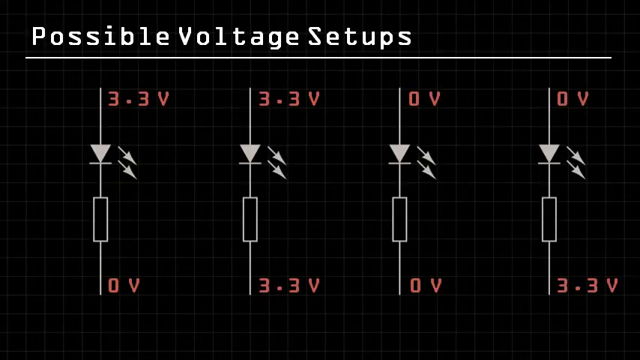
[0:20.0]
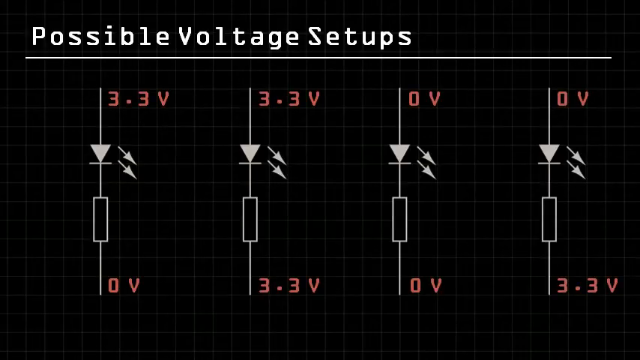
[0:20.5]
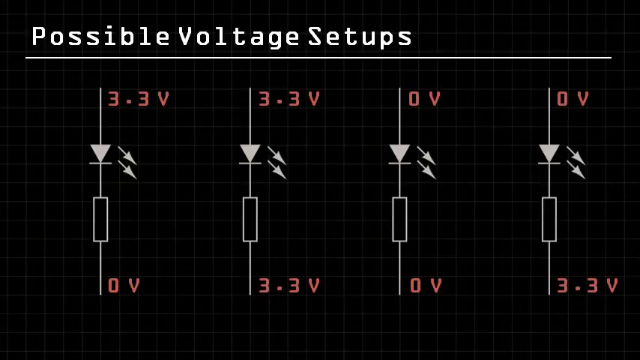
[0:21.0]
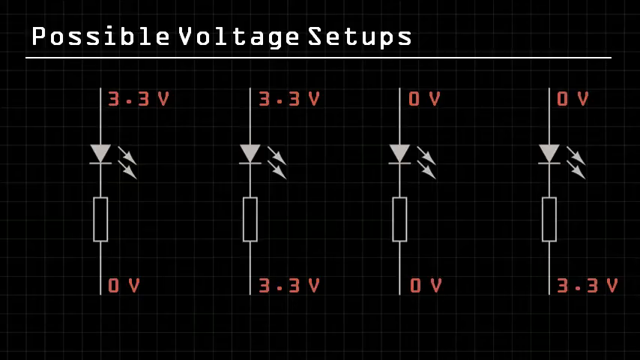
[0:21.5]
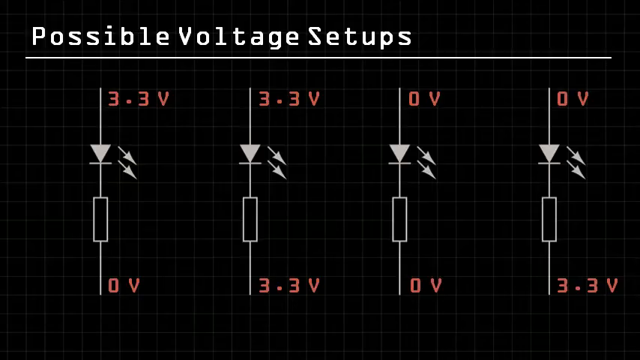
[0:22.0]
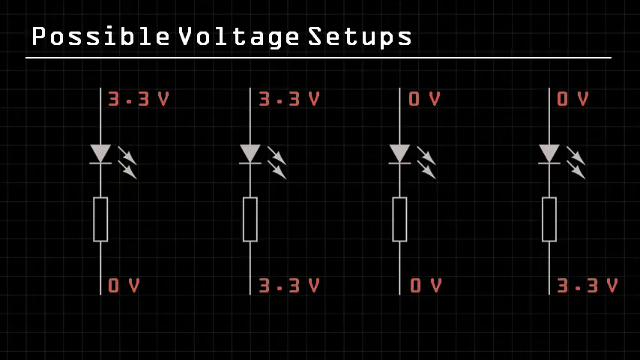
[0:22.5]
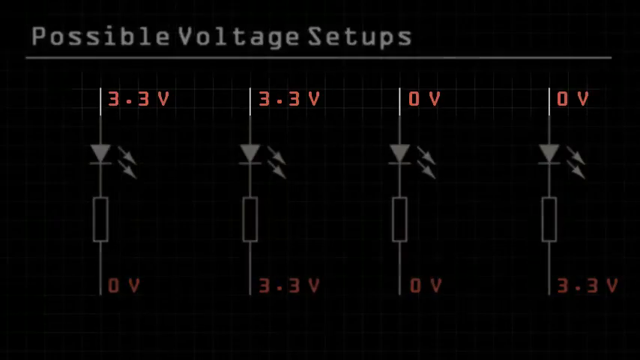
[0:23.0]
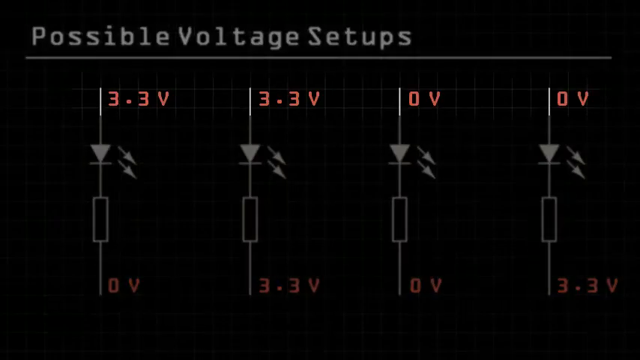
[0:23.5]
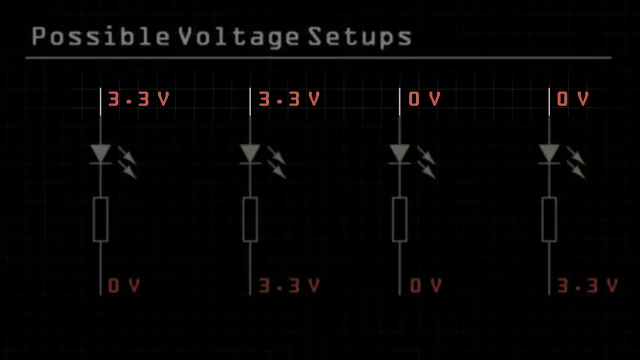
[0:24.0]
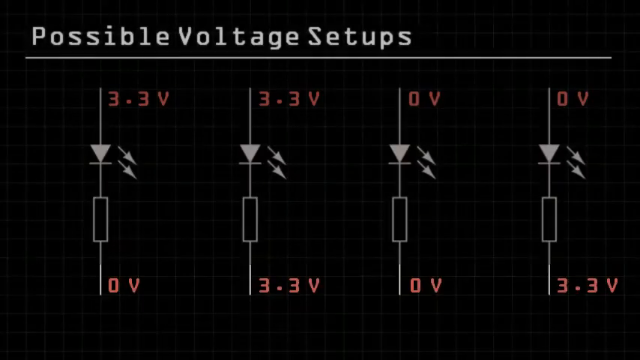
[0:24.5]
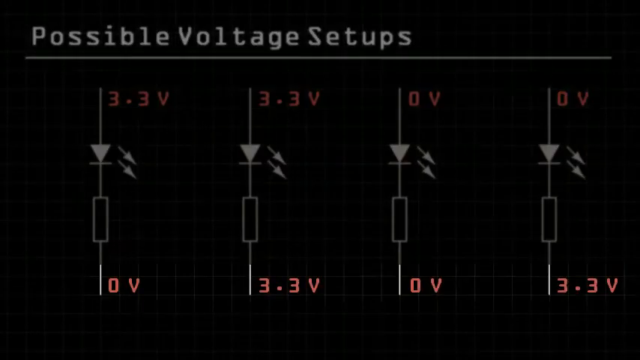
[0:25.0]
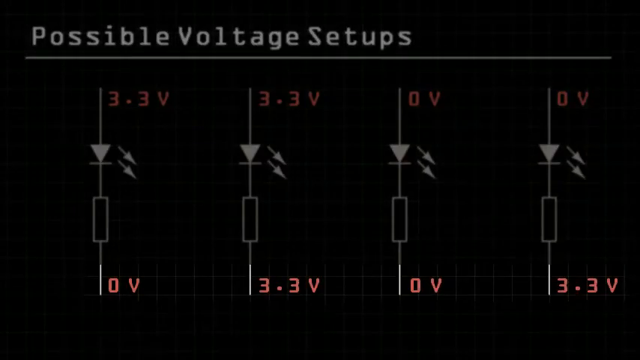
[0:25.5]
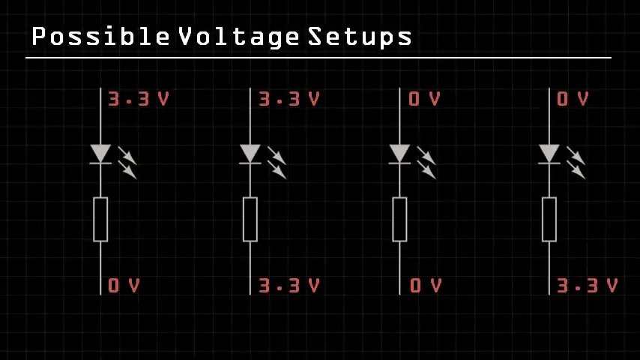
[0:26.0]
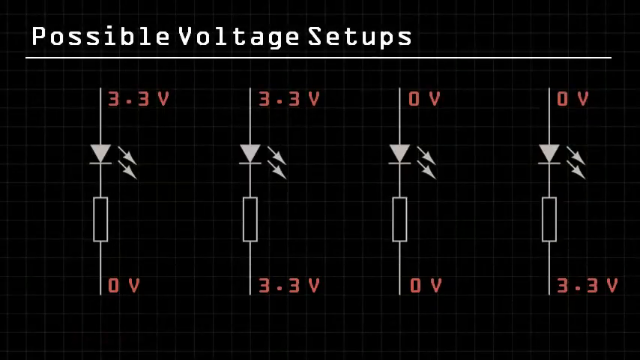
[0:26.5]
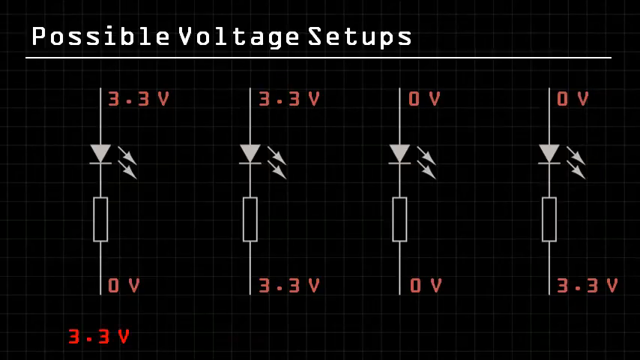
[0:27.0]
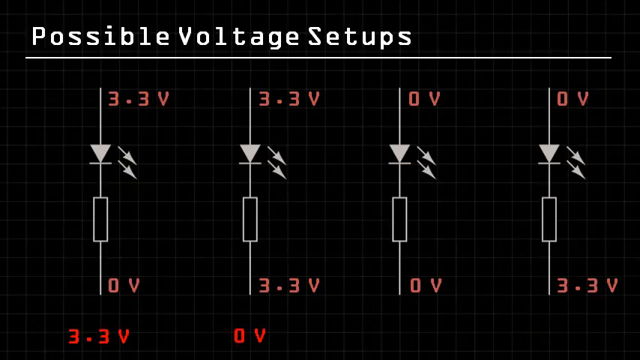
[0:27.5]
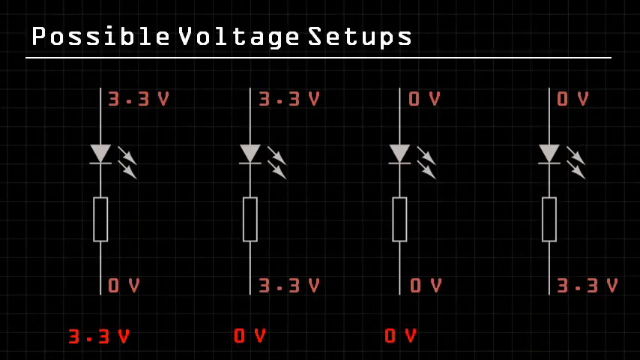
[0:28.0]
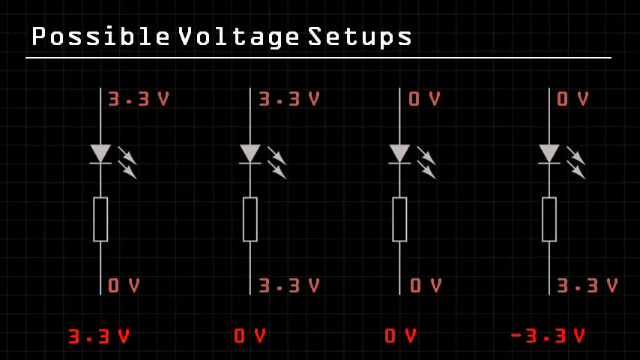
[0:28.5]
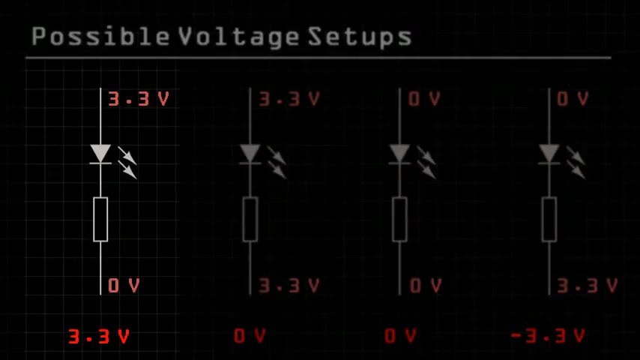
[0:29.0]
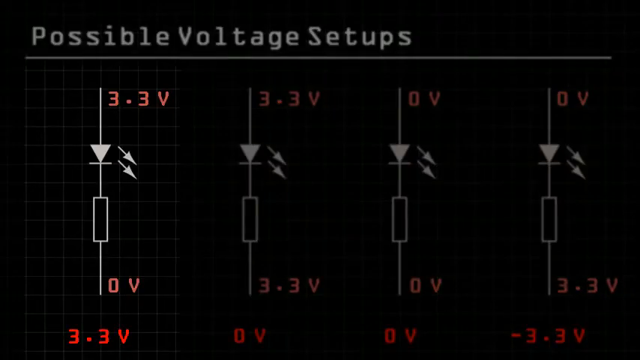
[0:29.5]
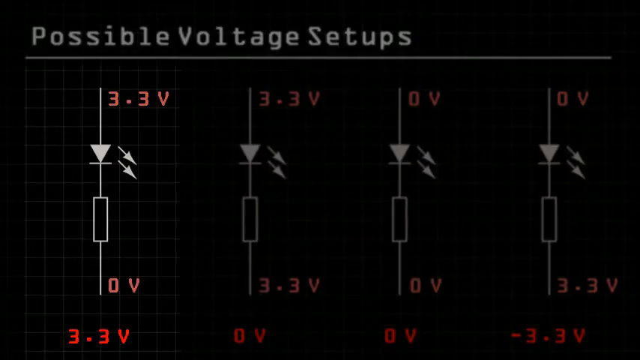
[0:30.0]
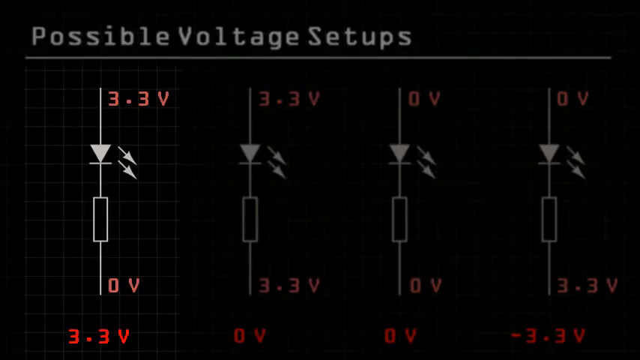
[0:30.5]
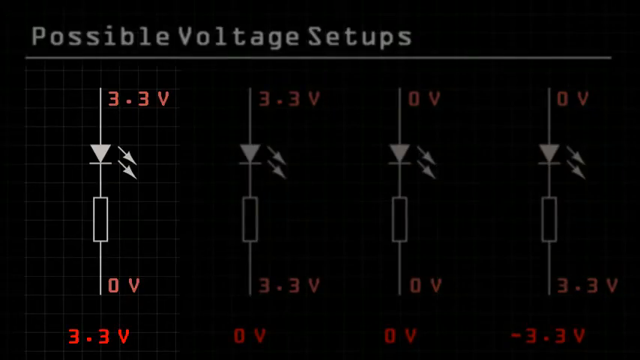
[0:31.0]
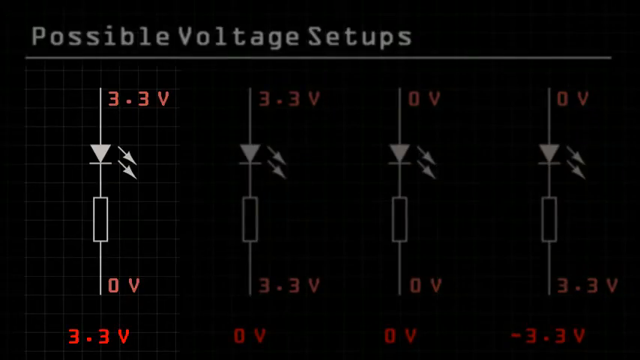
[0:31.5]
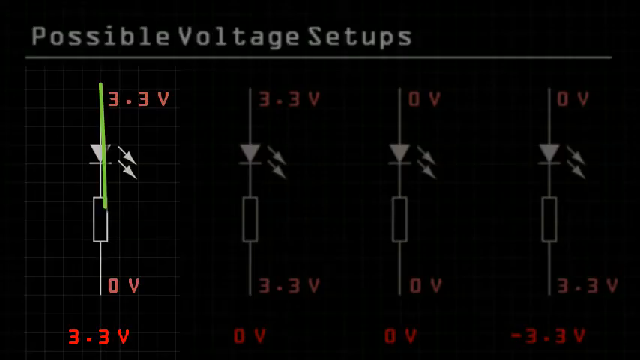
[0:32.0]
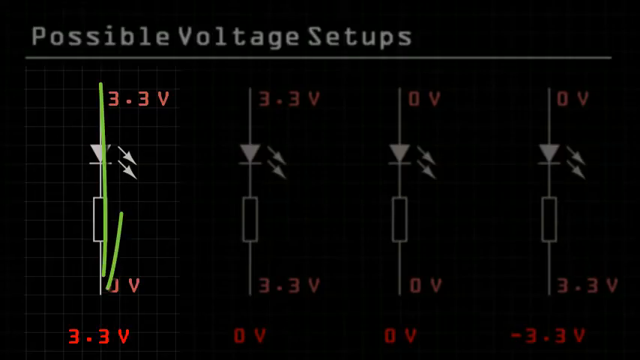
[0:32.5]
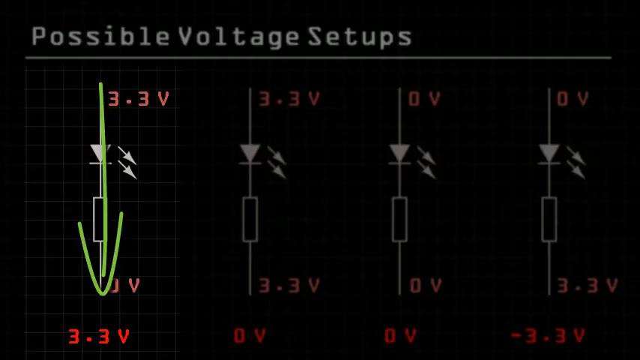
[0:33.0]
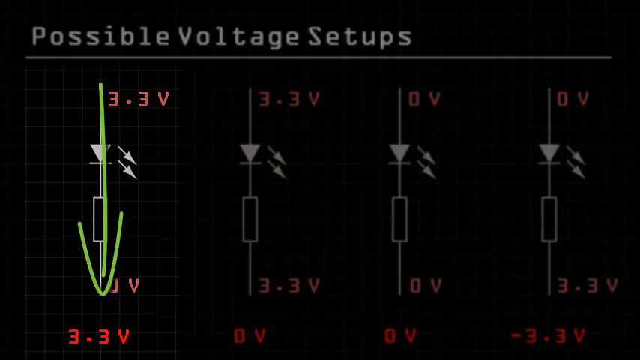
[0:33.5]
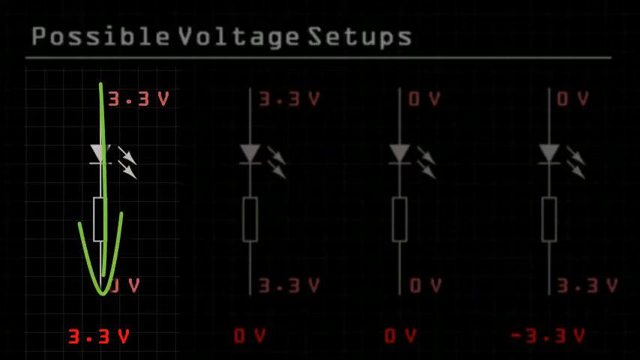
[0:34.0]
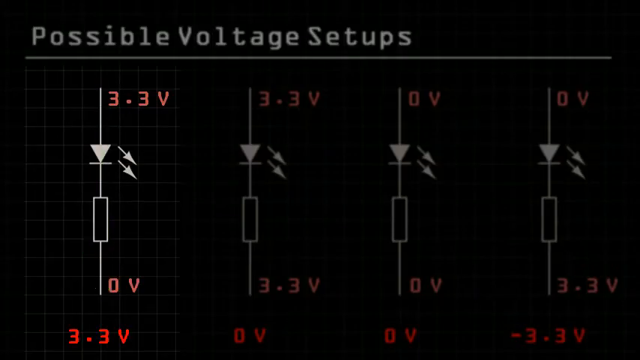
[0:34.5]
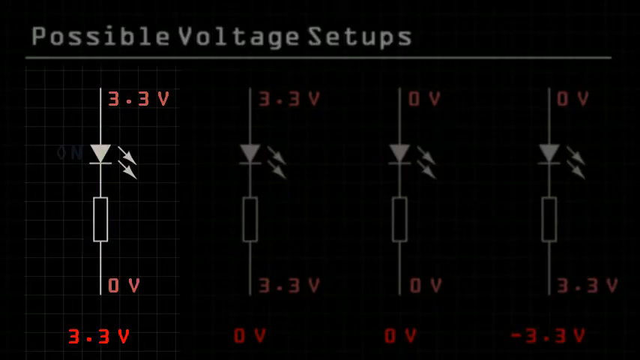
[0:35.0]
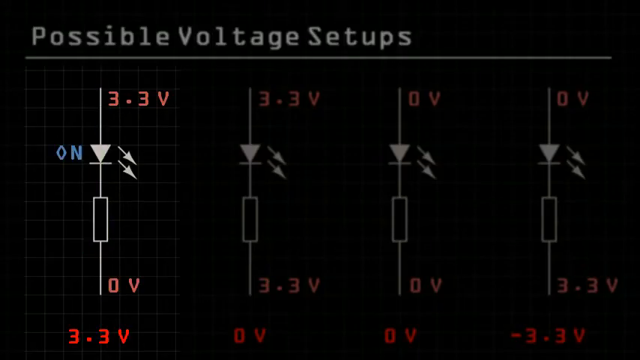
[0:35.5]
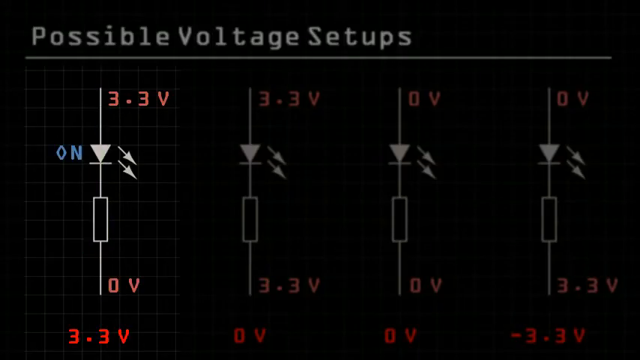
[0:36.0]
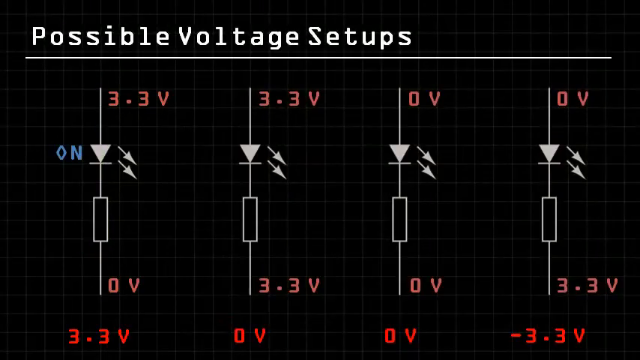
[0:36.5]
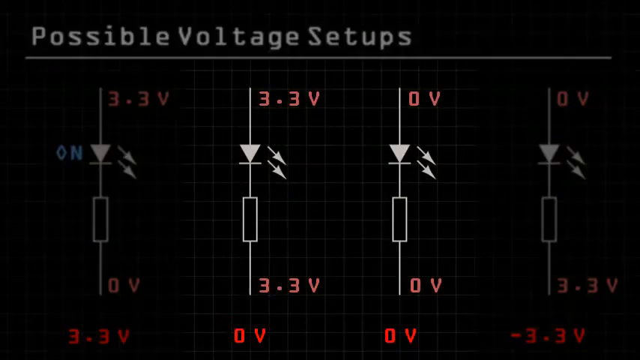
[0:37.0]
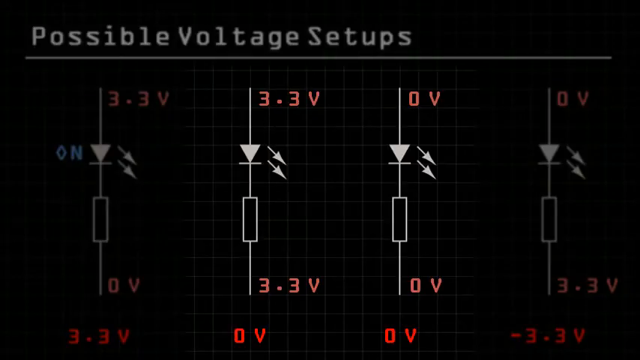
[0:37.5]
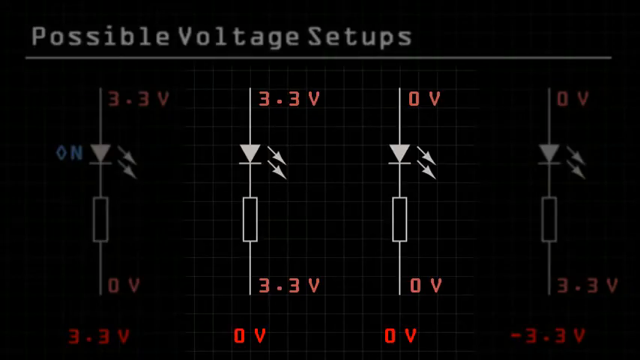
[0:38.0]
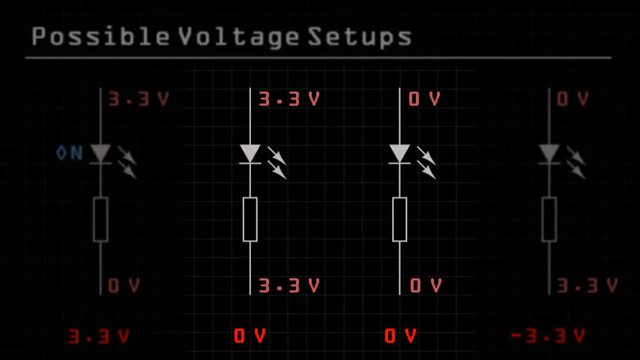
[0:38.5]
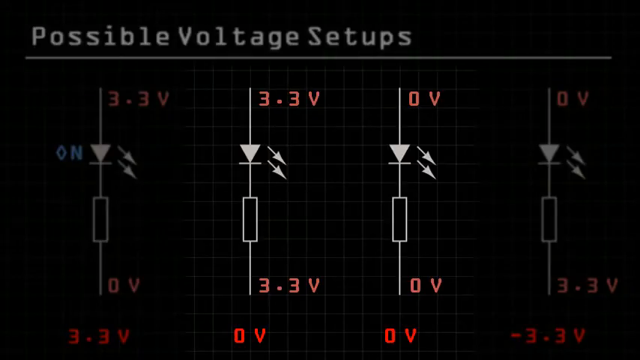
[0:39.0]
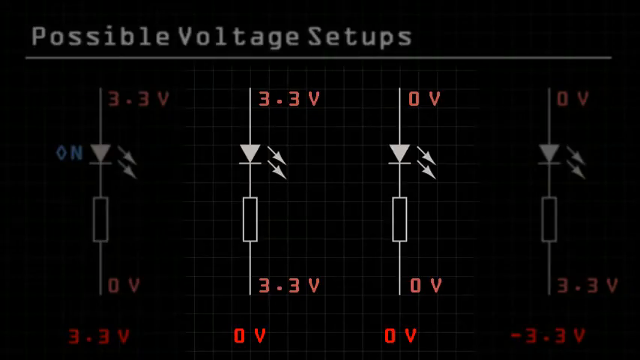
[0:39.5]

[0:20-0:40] The same possible voltage setups screen now has numbers appearing on each diagram. On the first, the top says 3.3 volts and the bottom 0 volts; on the second, the top is 3.3 volts and the bottom 3.3 volts; on the third, the top is 0 volts and the bottom 0 volts; and on the fourth, the top is 0 volts and the bottom 3.3 volts. The image fades so that mostly only the top values are in focus: 3.3V, 3.3V, 0V and 0V. It then switches so that only the voltages at the bottom are highlighted. Calculations appear in red below each diagram: 3.3V, then 0V, then 0V, then -3.3V. Each number is emphasized in turn by its color before the next number in line is emphasized.